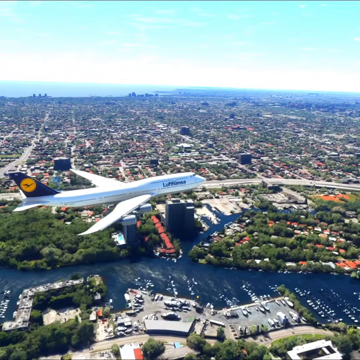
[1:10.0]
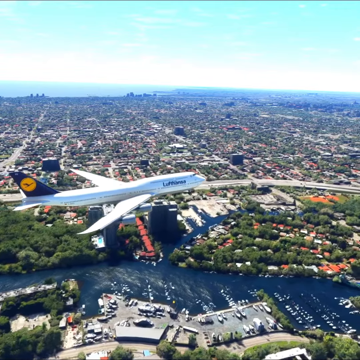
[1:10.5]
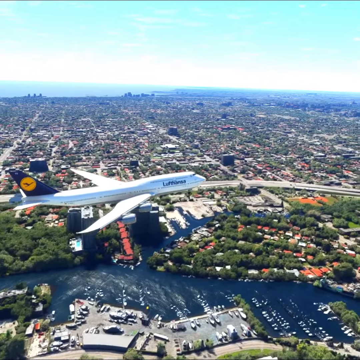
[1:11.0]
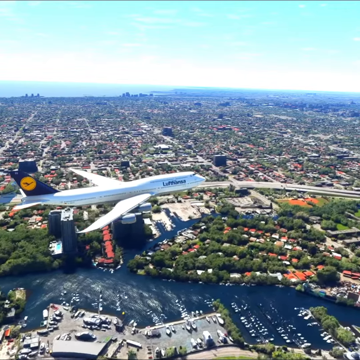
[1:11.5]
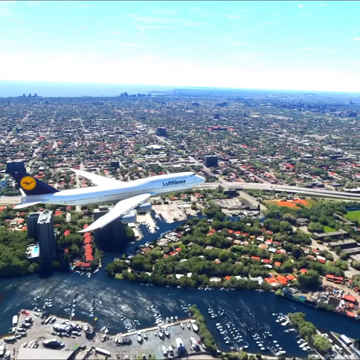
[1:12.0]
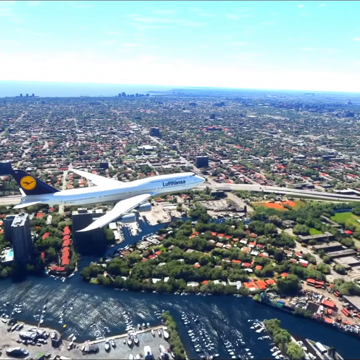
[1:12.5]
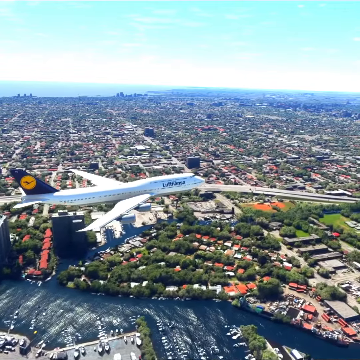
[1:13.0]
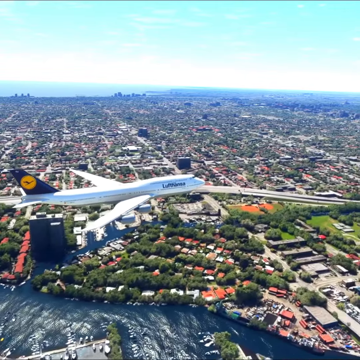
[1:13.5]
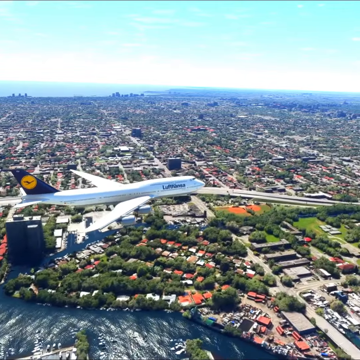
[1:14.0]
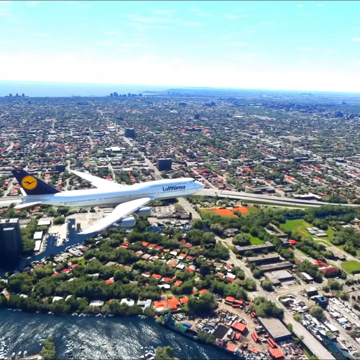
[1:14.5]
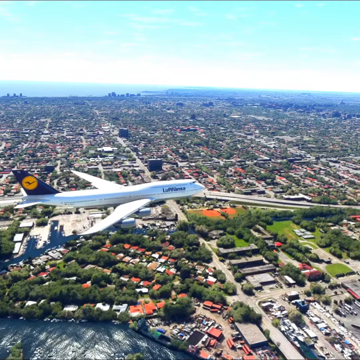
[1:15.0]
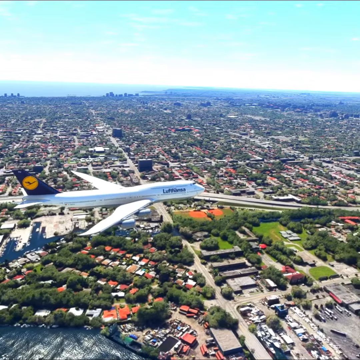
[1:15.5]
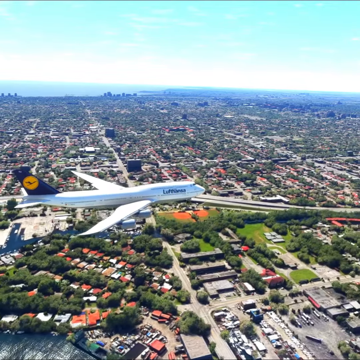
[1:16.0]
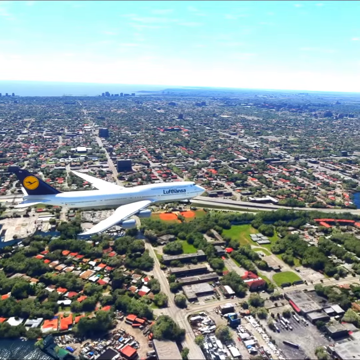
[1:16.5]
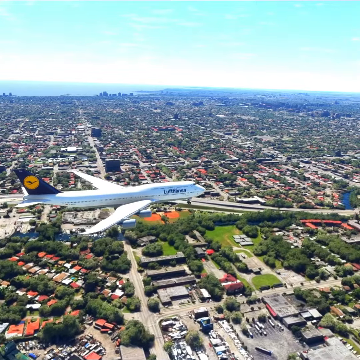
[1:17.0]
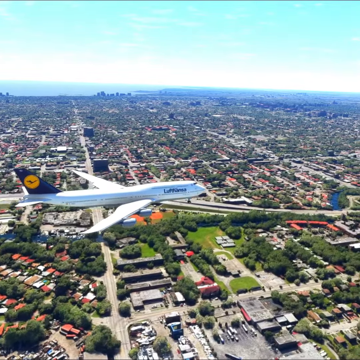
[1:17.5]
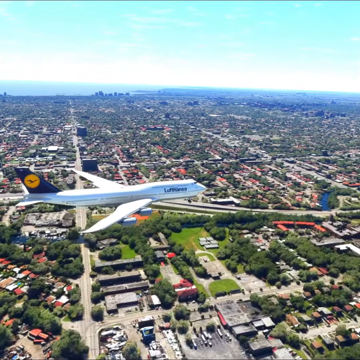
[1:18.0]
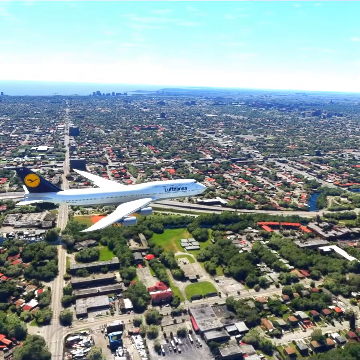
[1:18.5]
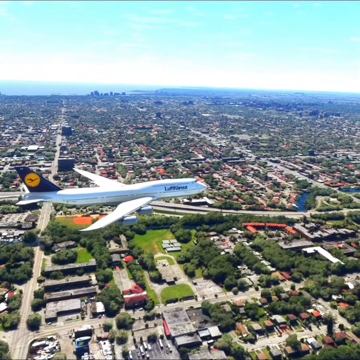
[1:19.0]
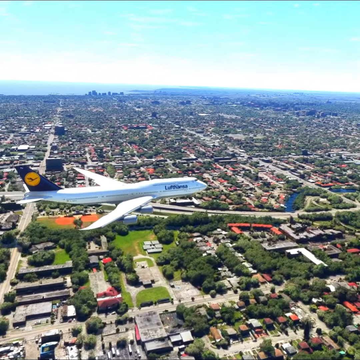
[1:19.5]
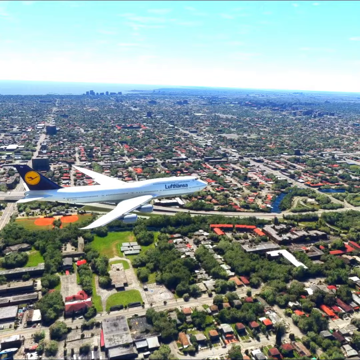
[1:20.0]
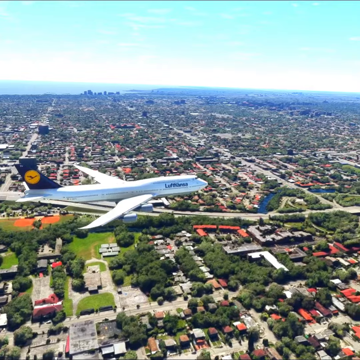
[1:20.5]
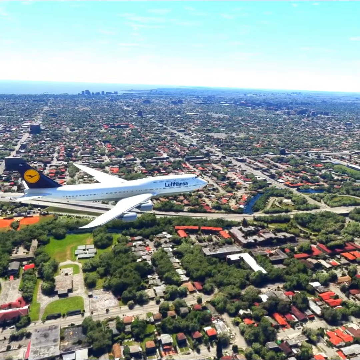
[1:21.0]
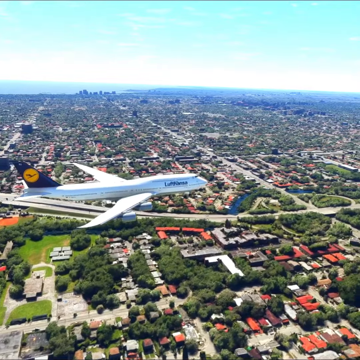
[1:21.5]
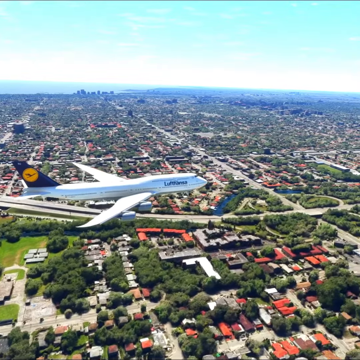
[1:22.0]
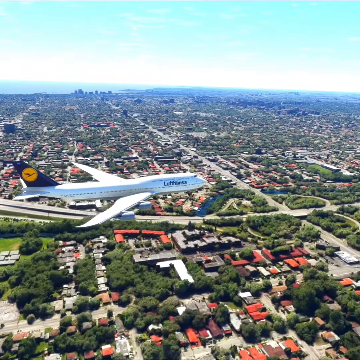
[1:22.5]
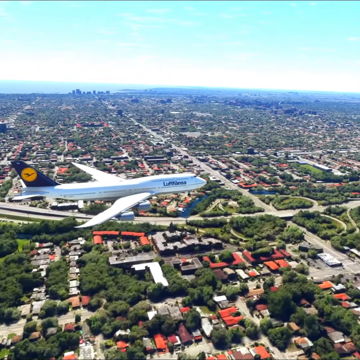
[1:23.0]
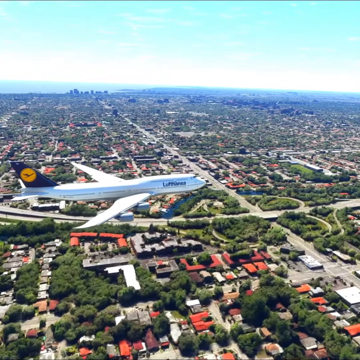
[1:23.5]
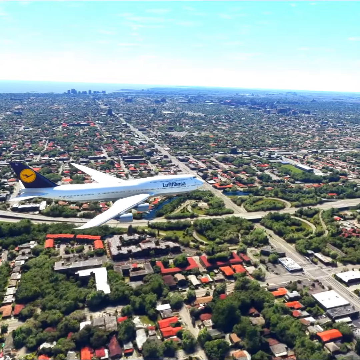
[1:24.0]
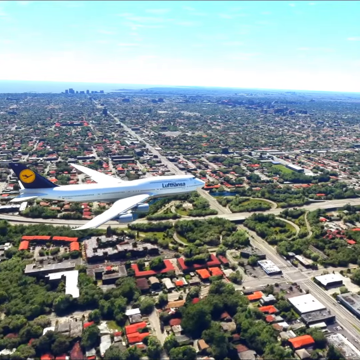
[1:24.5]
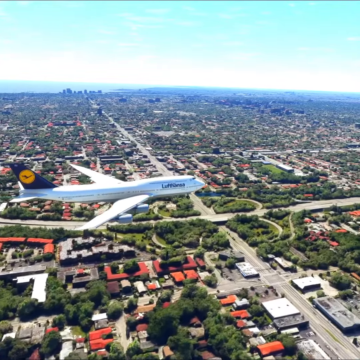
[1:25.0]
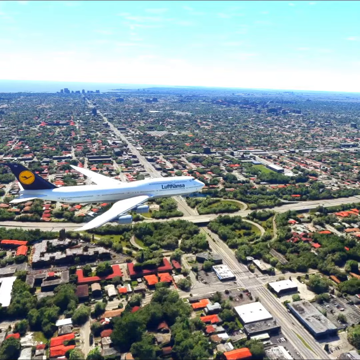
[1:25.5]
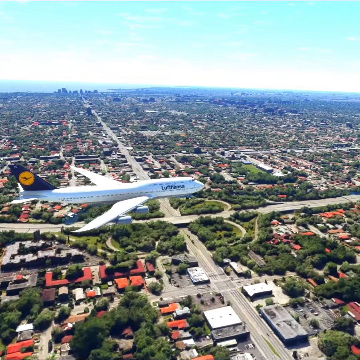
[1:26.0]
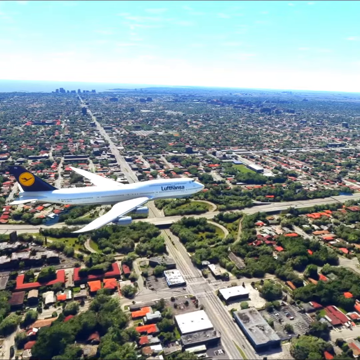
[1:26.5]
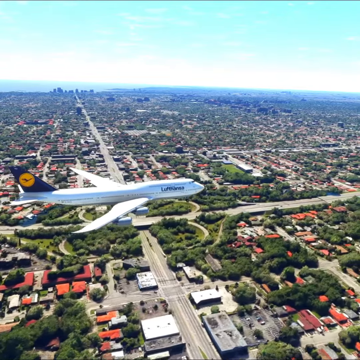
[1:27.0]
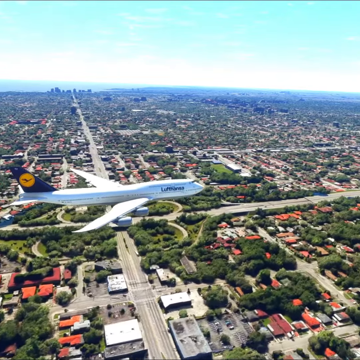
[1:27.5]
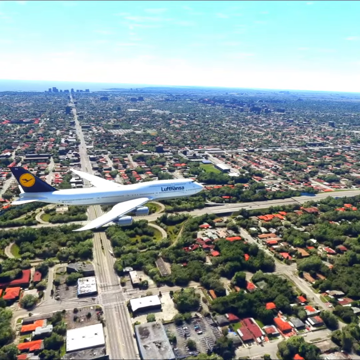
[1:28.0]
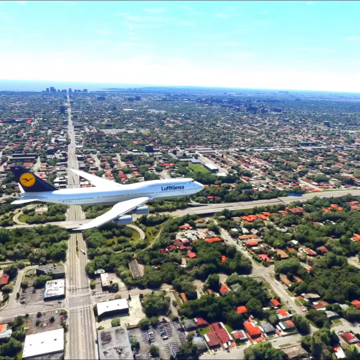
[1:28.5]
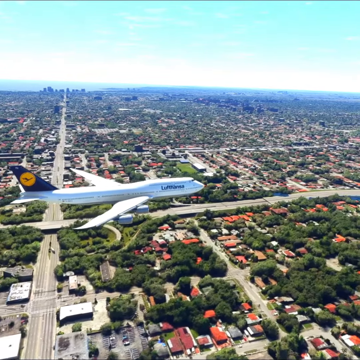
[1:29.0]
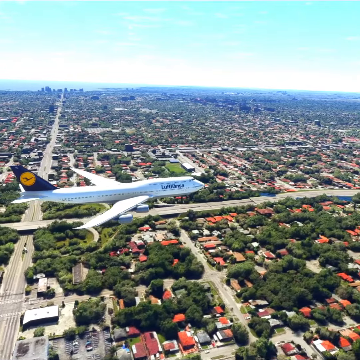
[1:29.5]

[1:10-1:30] A large white passenger airliner flies low over a populated area. Below is a boat marina on a large dark blue river, with quite a few boats at the marina and in the parking lot on the river. There are many houses, with a lot of bright red rooftops, and some tall buildings. As it continues low, a green area that looks like a park comes into view, followed by more houses, roads and freeways, with trees interspersed among them. Many green trees stand out among the rooftops, which are mostly red. The area is very flat and heavily populated. There is water in the background, and the sky above is light blue with white wispy clouds. The plane continues flying at this low level without changing its height at all.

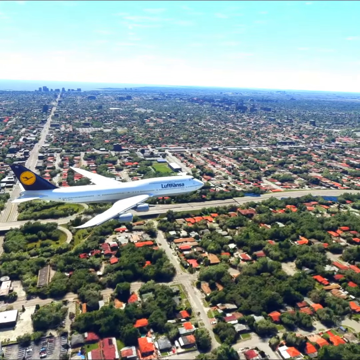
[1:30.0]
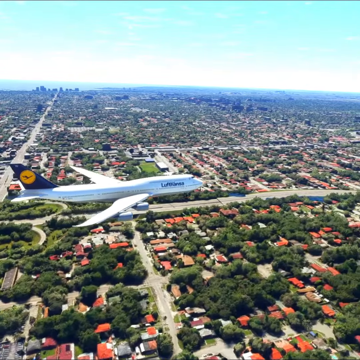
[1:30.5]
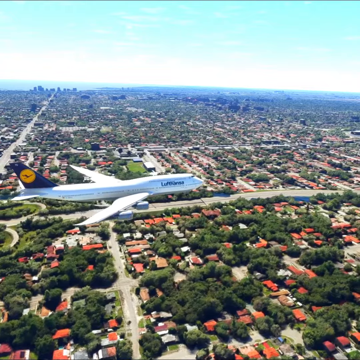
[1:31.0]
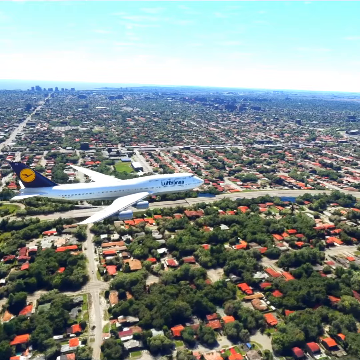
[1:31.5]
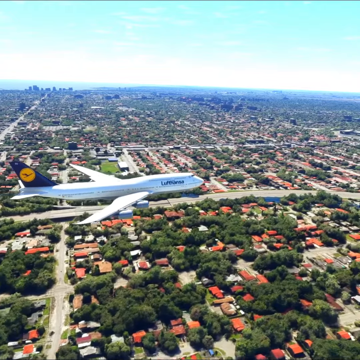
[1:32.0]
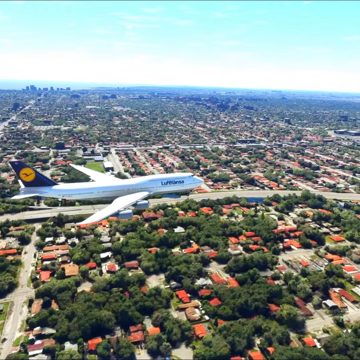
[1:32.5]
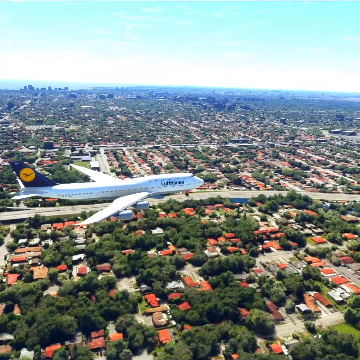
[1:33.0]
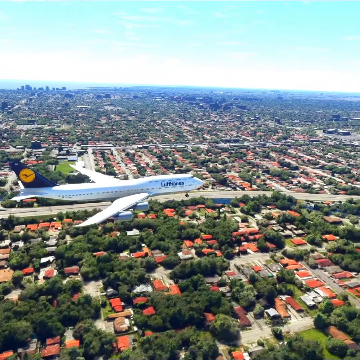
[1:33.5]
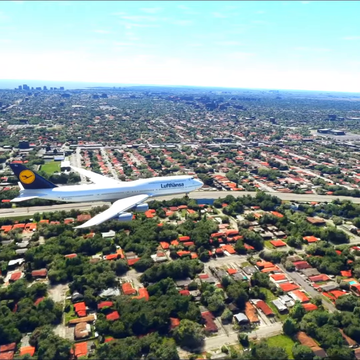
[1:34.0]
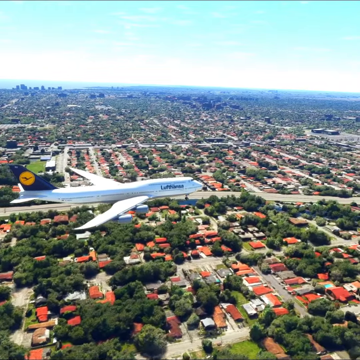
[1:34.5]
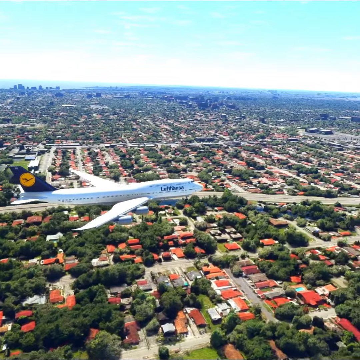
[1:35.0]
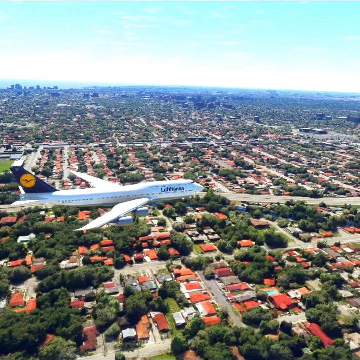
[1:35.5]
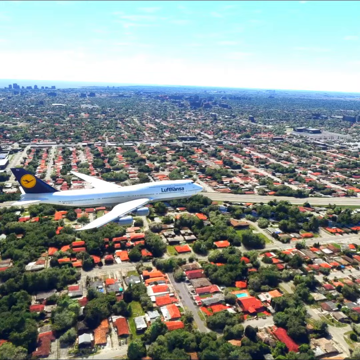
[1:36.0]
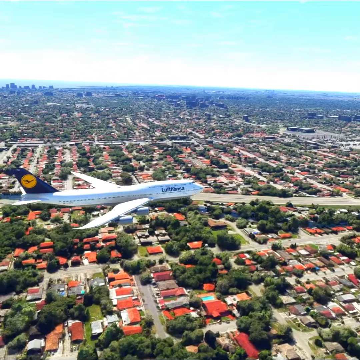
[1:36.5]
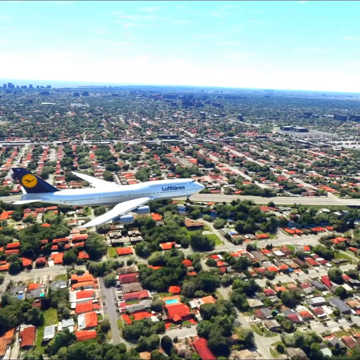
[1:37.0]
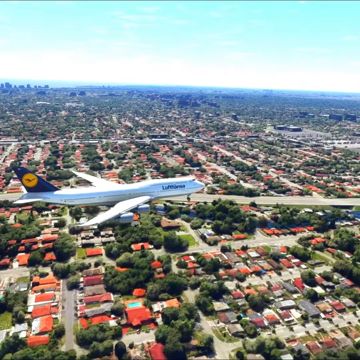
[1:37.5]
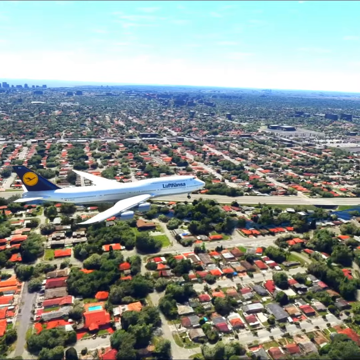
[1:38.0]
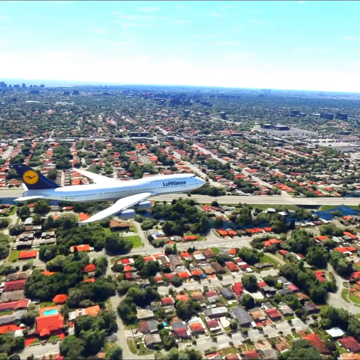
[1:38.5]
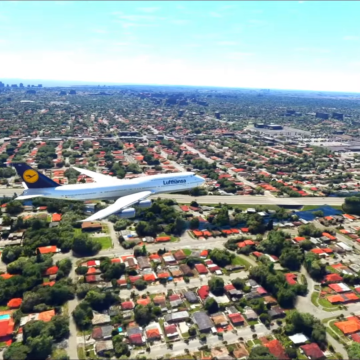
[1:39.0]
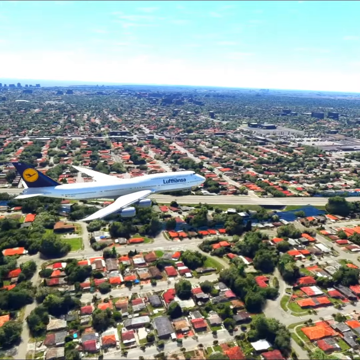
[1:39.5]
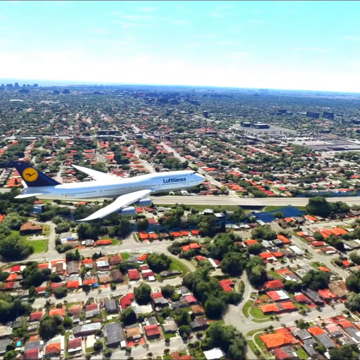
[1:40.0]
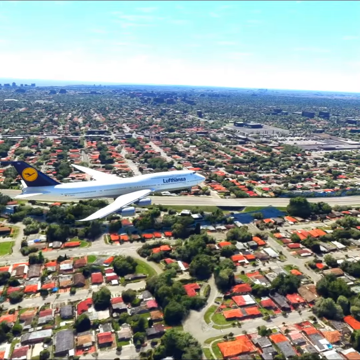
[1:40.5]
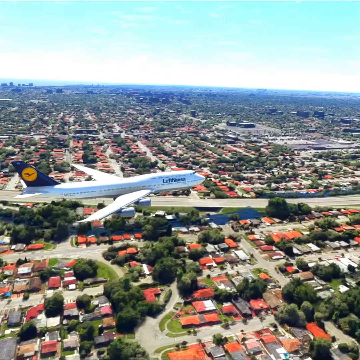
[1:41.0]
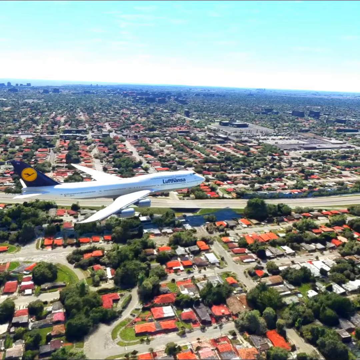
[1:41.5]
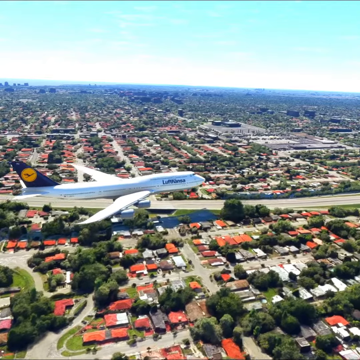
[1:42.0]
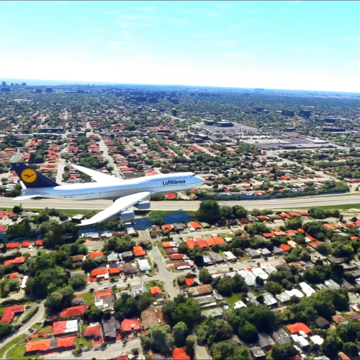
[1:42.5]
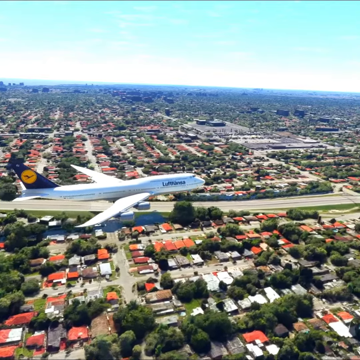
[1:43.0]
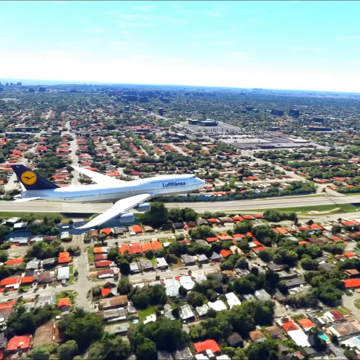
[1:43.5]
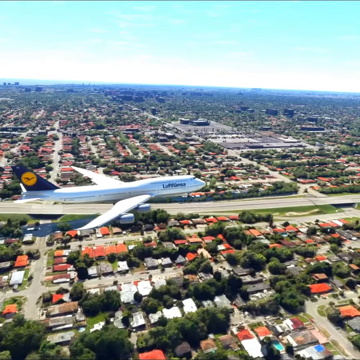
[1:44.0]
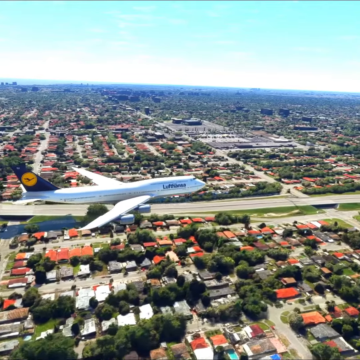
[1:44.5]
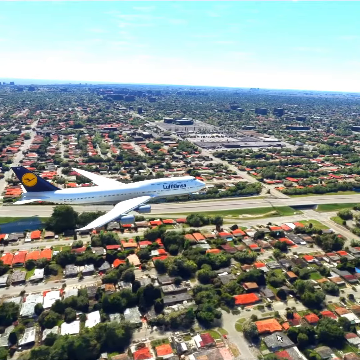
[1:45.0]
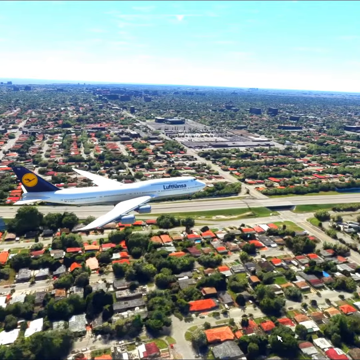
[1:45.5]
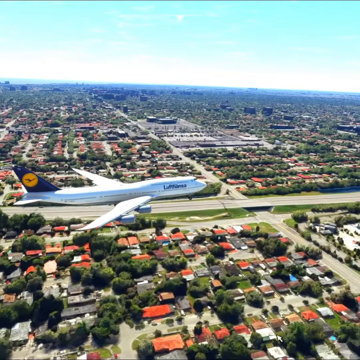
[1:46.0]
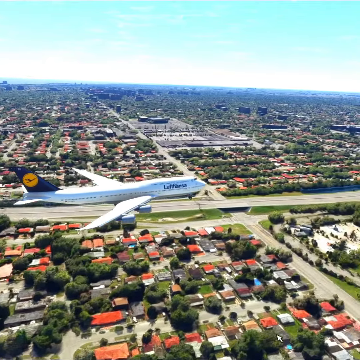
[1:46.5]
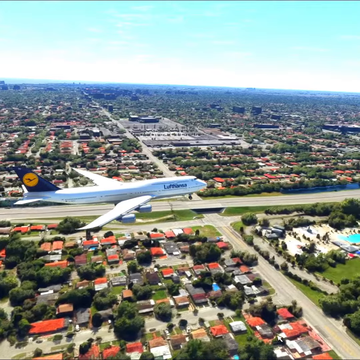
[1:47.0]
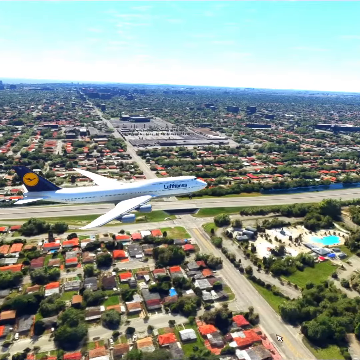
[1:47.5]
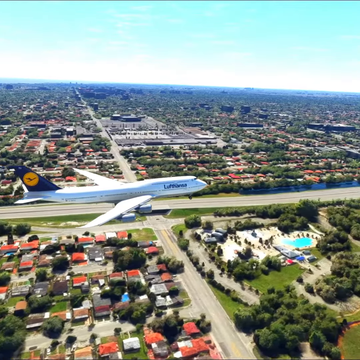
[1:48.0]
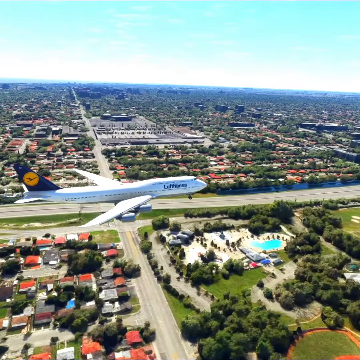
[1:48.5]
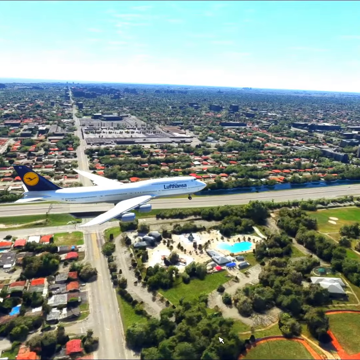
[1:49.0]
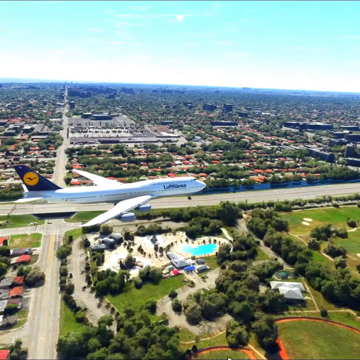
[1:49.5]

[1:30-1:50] A large white Lufthansa airliner flies low over a populated area, and its front landing wheel is now down. Below are many rooftops, most of them a bright red color, with many trees in the neighborhoods, and freeways and side streets. The ground is very flat and very populated. In the background are a light blue sky with wispy clouds and neighborhoods below. As the plane continues, a large green area that looks like a park comes into view, with a large pool or swimming area at one end with a sand beach, plus grass fields and trees; it looks like a very large recreational area. There also appears to be a golf course below. Preparing to land, the plane travels very low, going straight ahead over the area.